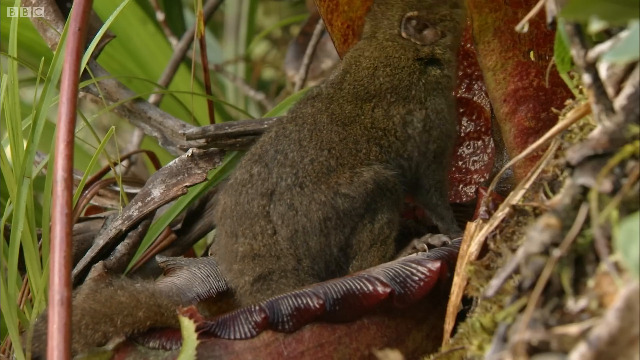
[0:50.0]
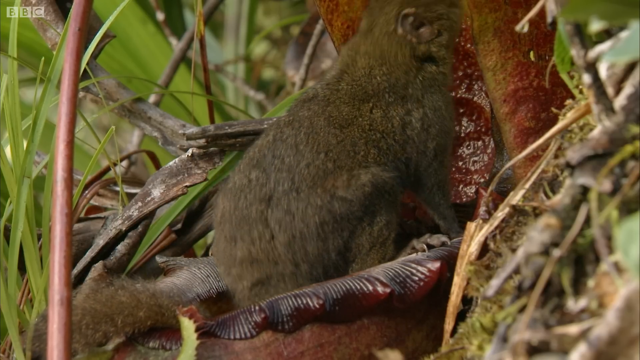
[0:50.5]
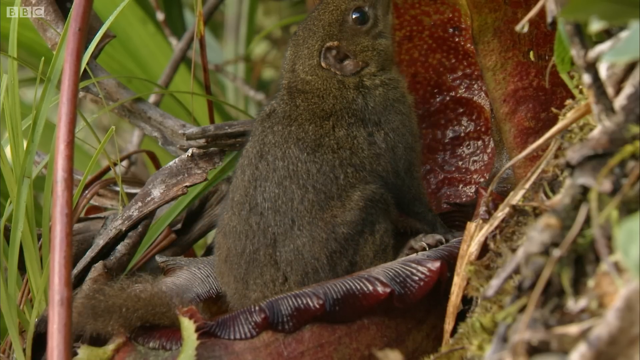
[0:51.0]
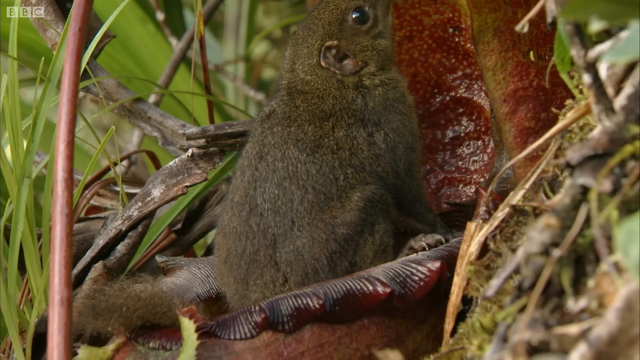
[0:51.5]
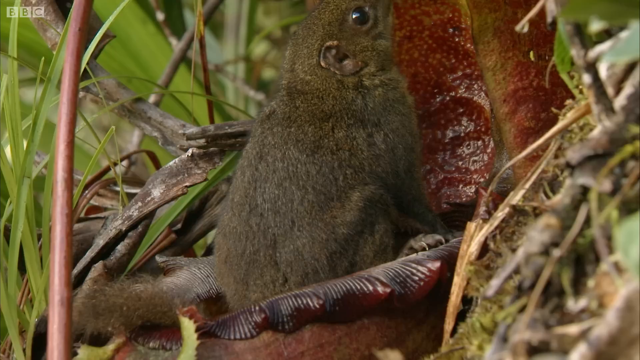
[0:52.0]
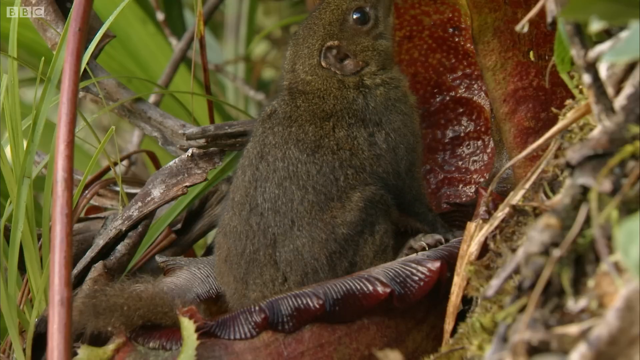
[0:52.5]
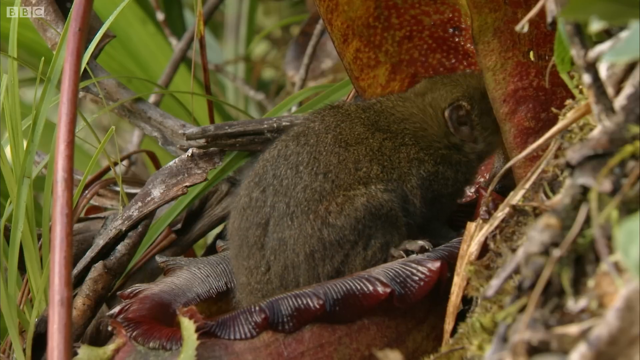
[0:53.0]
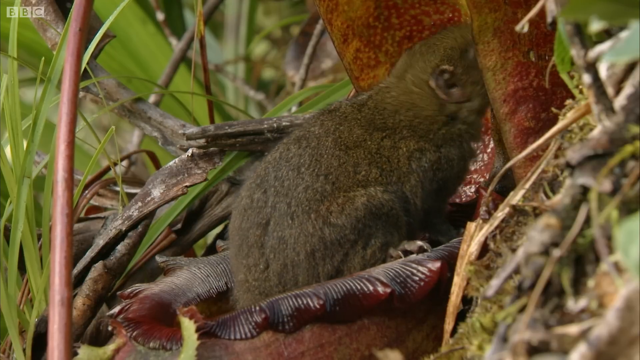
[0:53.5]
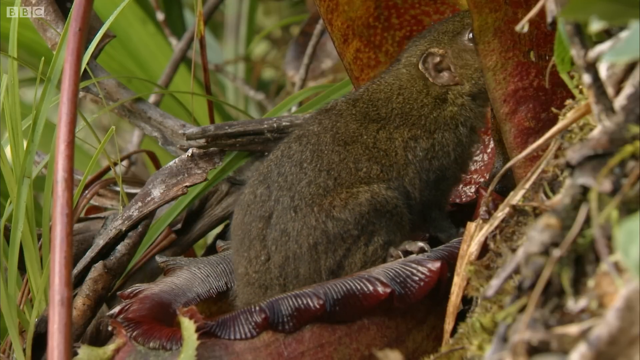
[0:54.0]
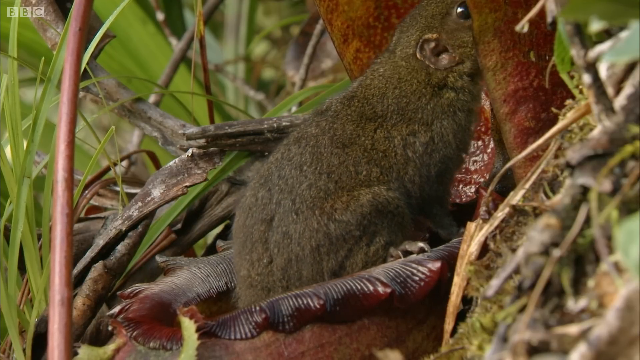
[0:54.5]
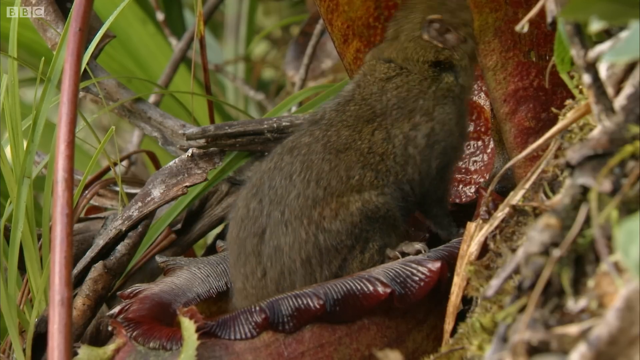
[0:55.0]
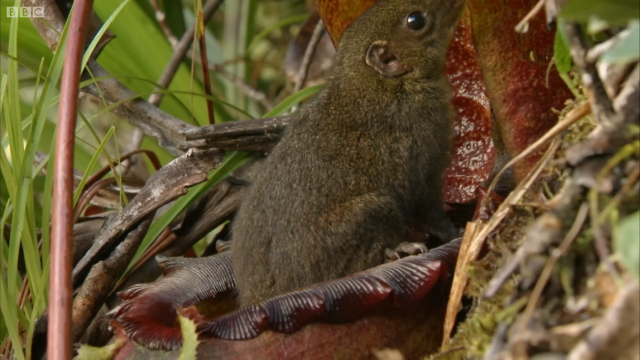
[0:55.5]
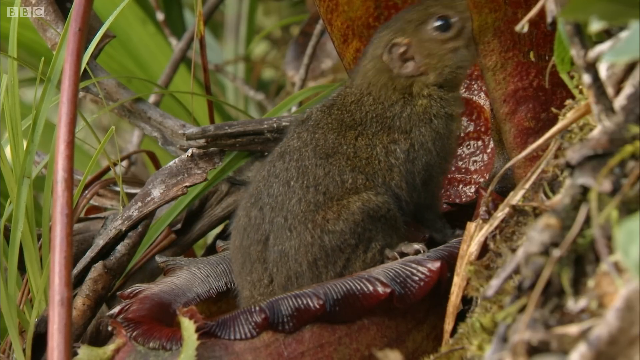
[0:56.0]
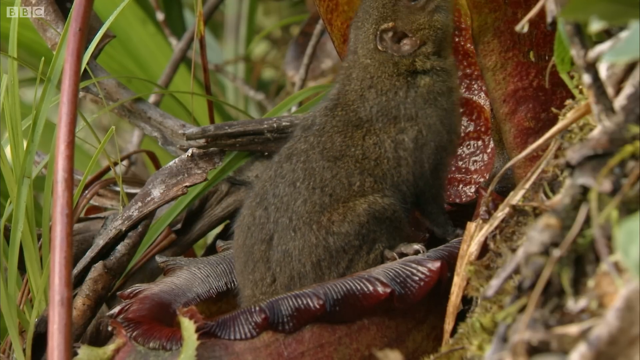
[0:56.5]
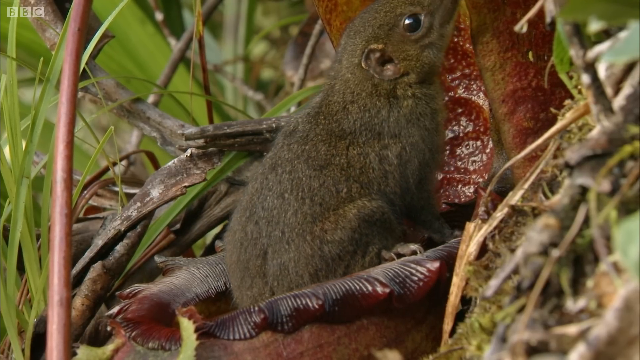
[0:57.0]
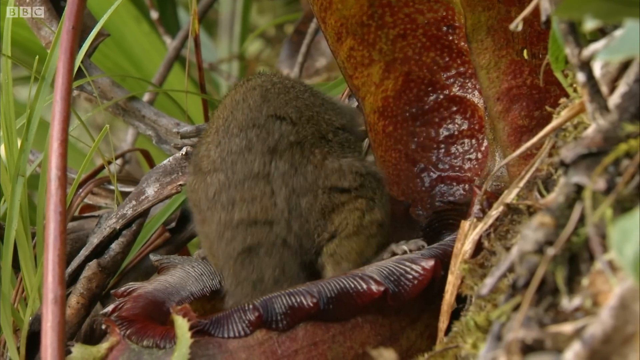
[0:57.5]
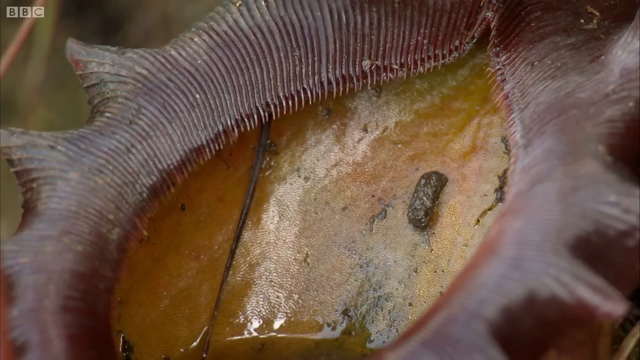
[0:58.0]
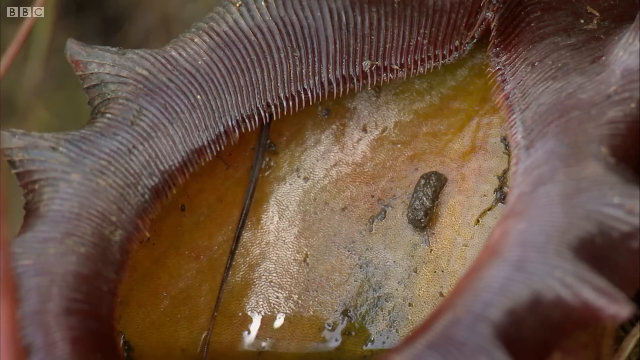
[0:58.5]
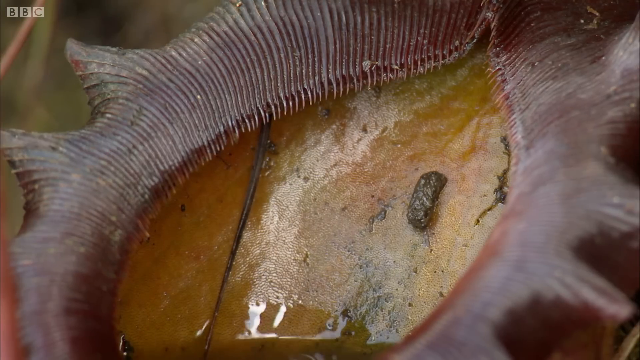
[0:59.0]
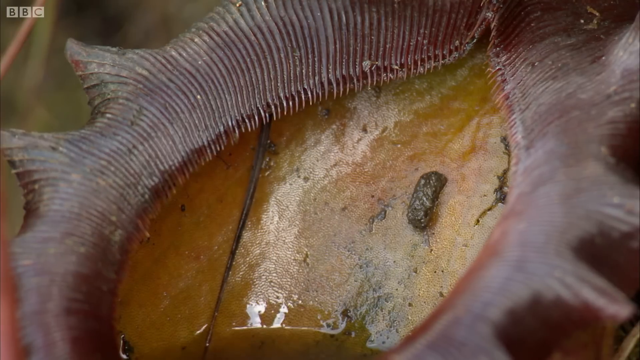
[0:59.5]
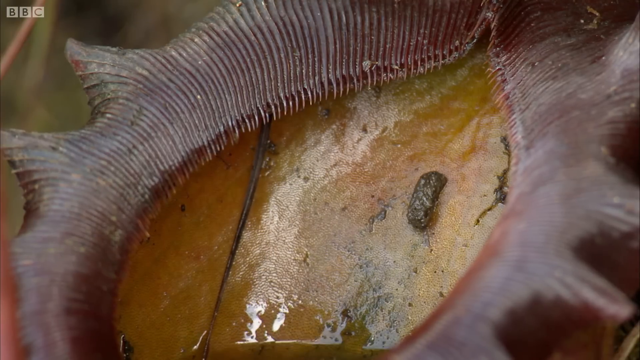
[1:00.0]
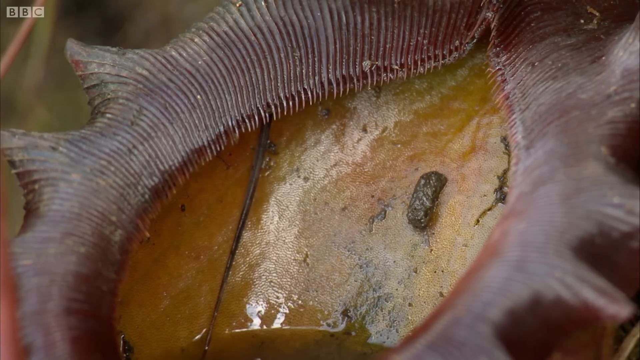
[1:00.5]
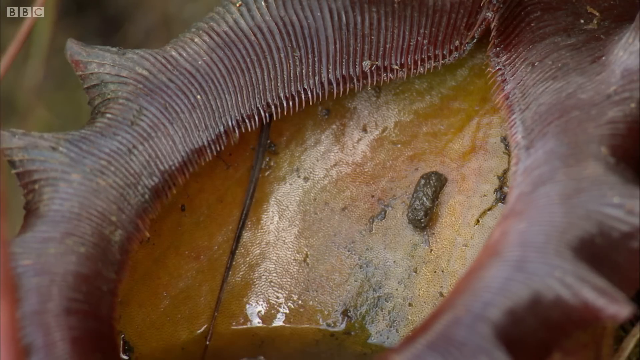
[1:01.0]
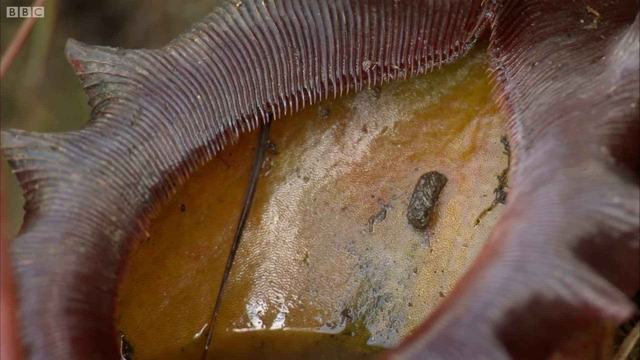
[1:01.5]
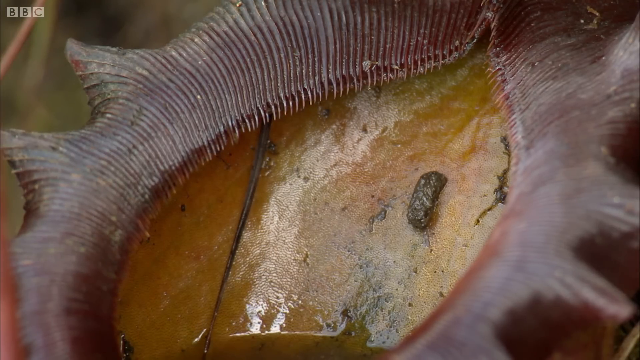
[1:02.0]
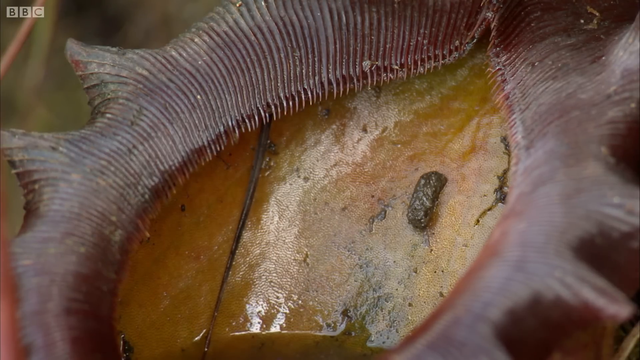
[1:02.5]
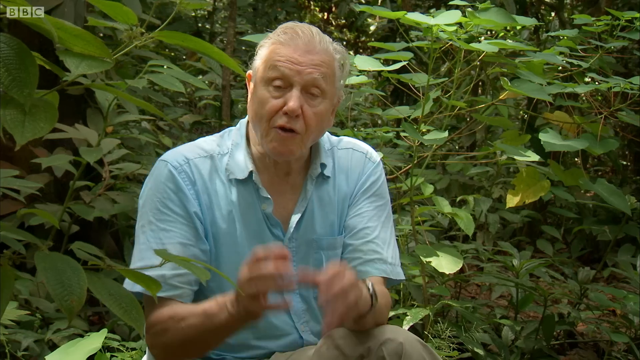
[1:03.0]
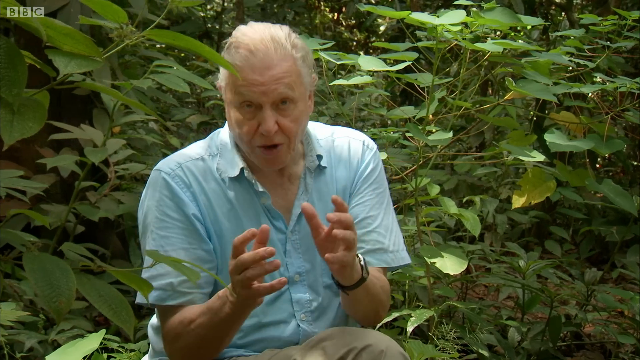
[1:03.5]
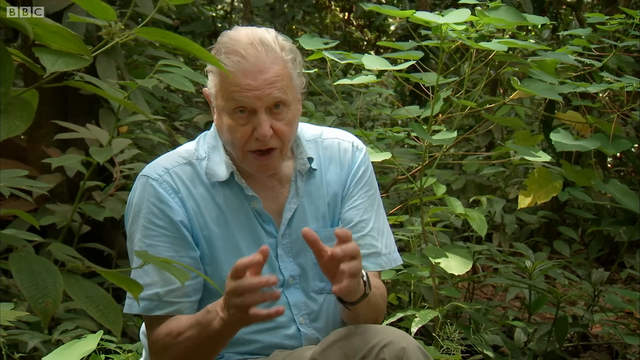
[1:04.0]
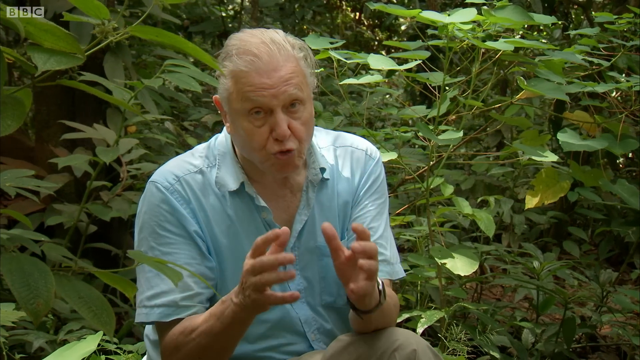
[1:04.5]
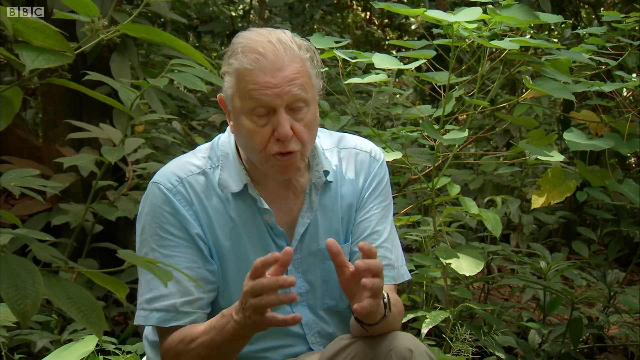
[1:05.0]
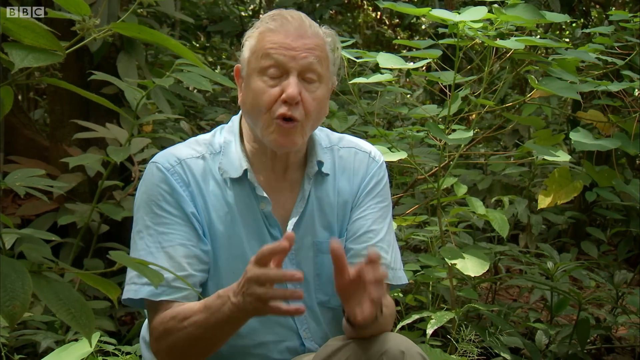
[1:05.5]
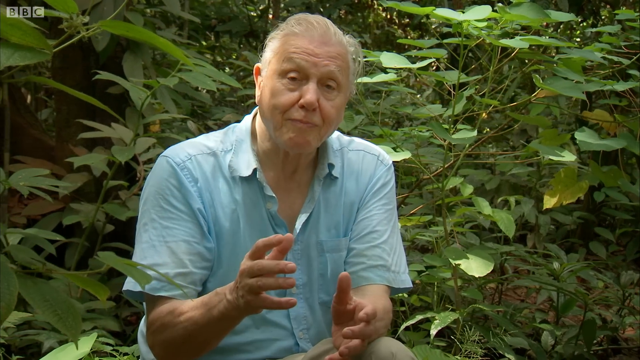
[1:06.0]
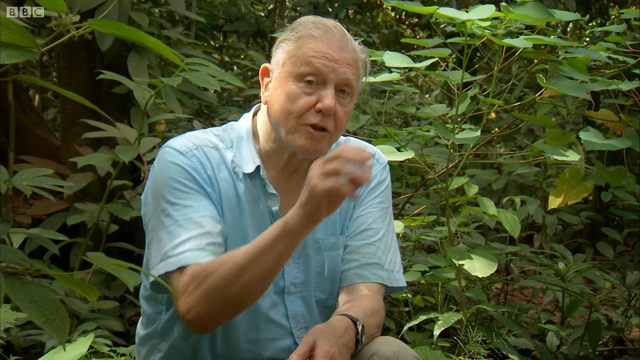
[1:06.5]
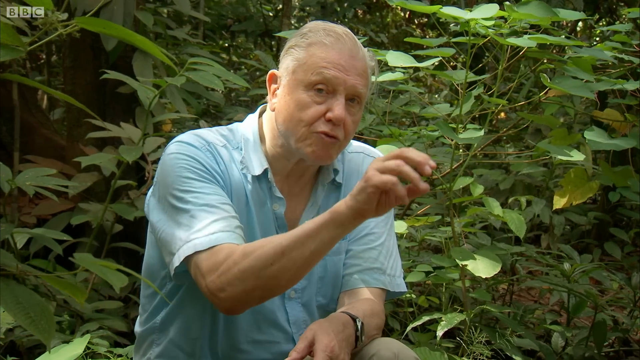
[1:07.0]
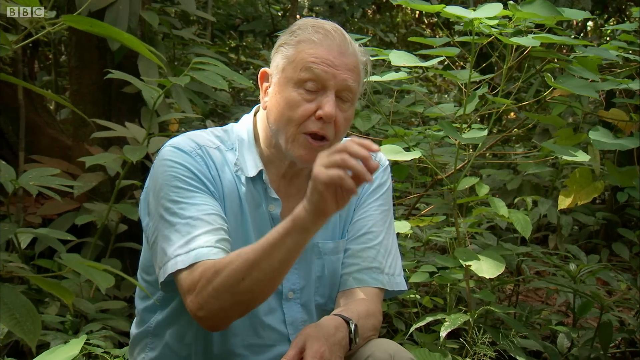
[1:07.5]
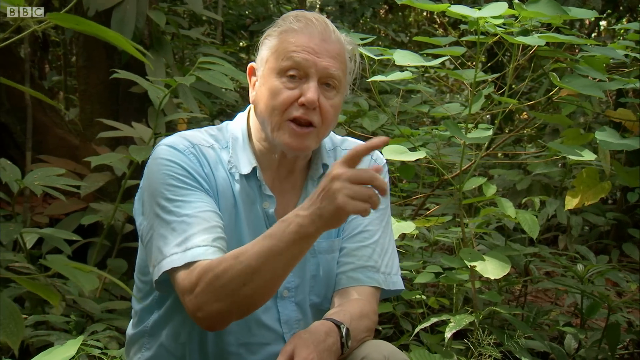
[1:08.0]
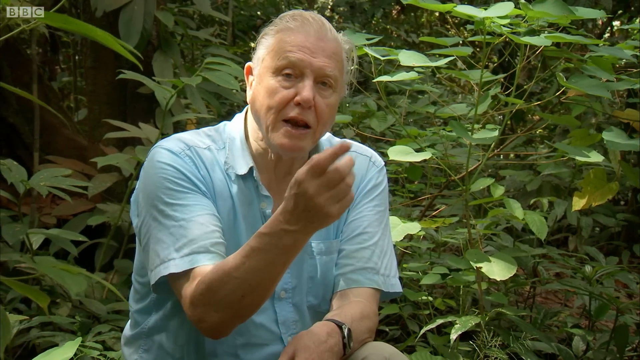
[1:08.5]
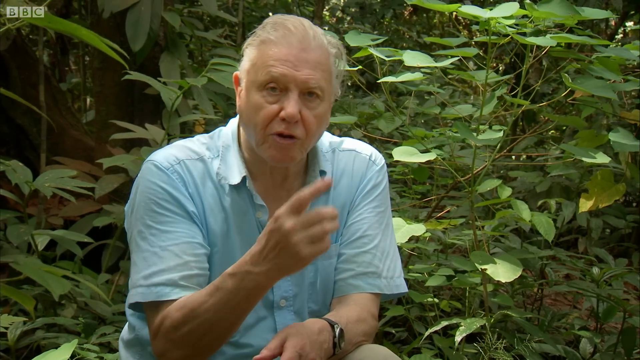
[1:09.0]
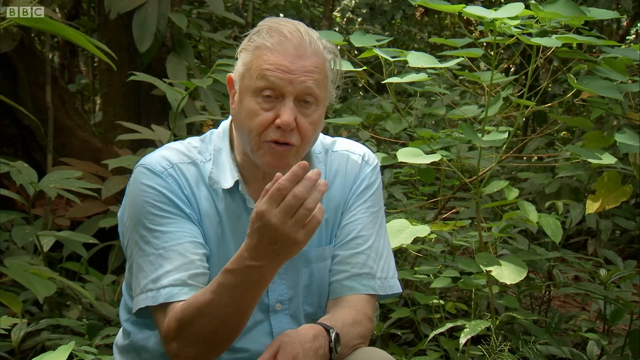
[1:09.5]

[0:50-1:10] The mammal is sitting on the bowl-like edge of the plant, licking the top section of the plant. The bowl-like part of the plant has a scalloped edge folding over, with a ribbed texture, and the inside of the bowl looks yellow, green and orange. After licking the top of the plant, the mammal suddenly jumps off the bowl to the left and out of sight, flicking some water with its tail as it jumps. The camera then zooms in on the bowl-like bottom of the plant, which is full of perhaps water, maybe urine, and what appears to be feces. The camera then returns to the man sitting and talking, zoomed in so that only his torso, head and arms are visible.